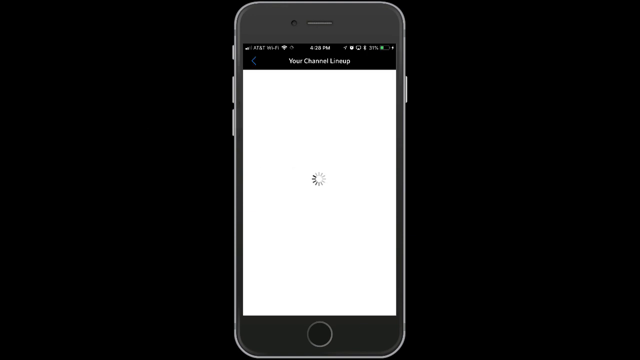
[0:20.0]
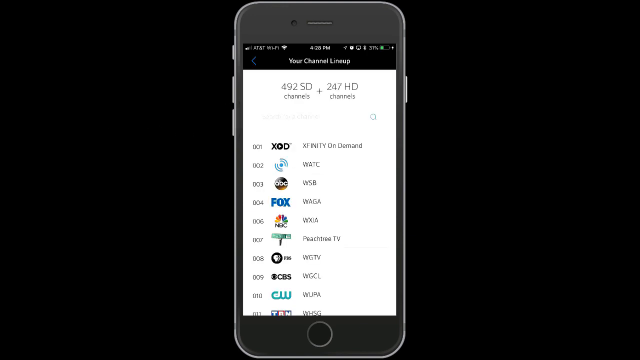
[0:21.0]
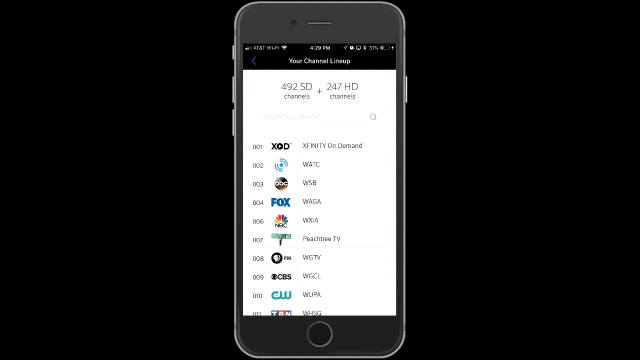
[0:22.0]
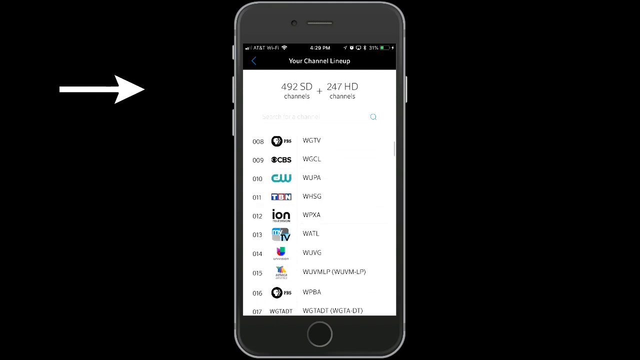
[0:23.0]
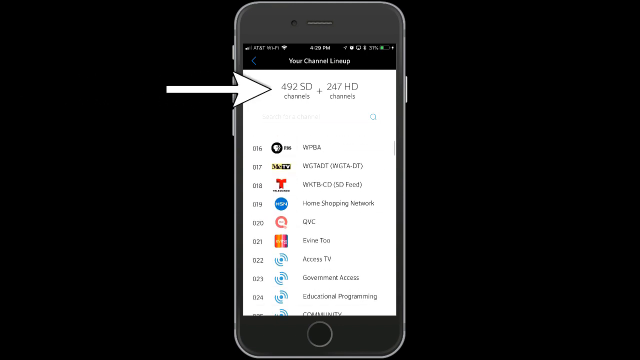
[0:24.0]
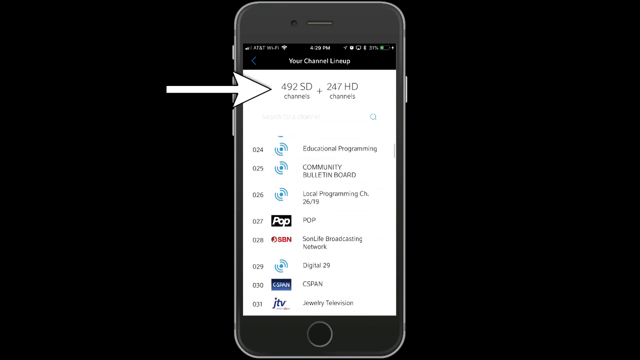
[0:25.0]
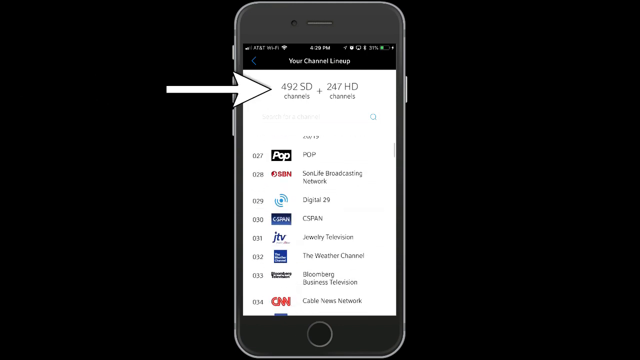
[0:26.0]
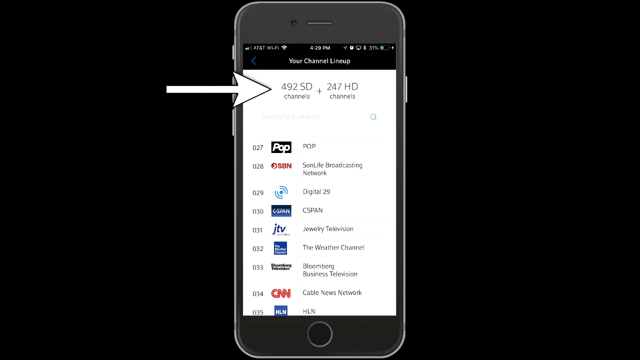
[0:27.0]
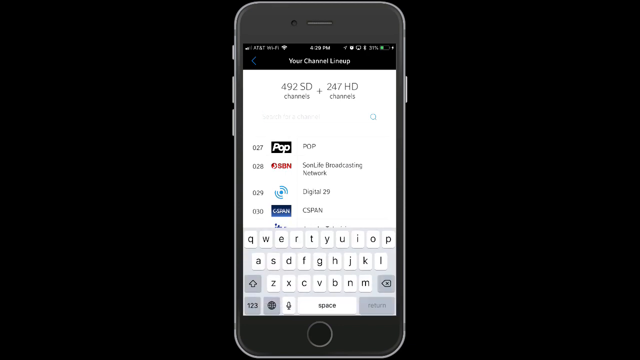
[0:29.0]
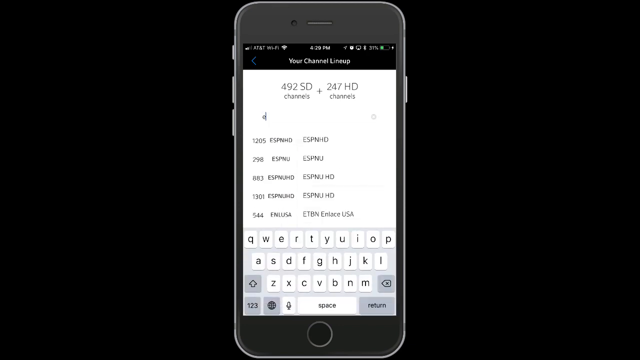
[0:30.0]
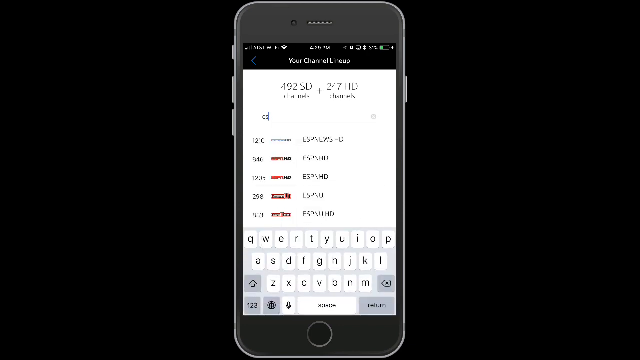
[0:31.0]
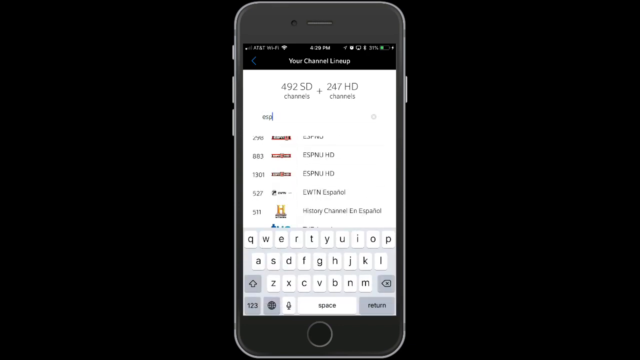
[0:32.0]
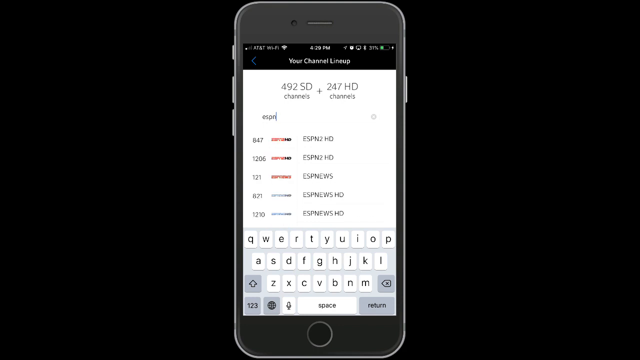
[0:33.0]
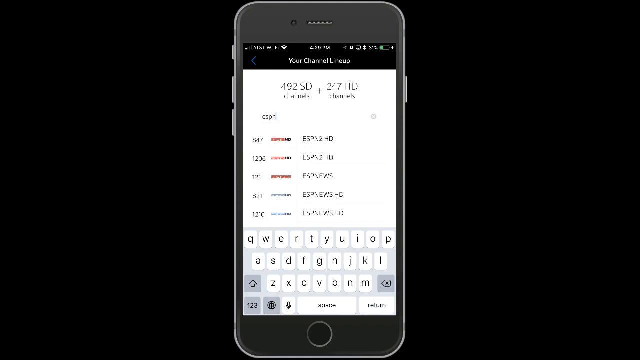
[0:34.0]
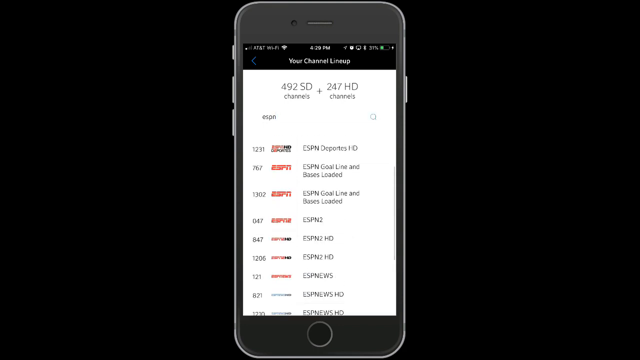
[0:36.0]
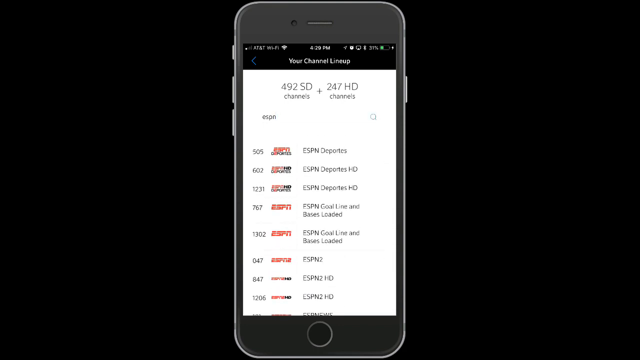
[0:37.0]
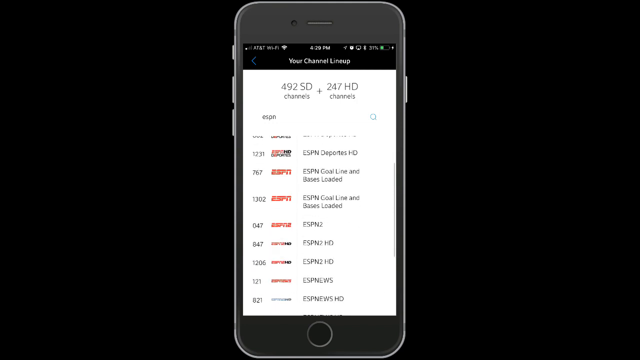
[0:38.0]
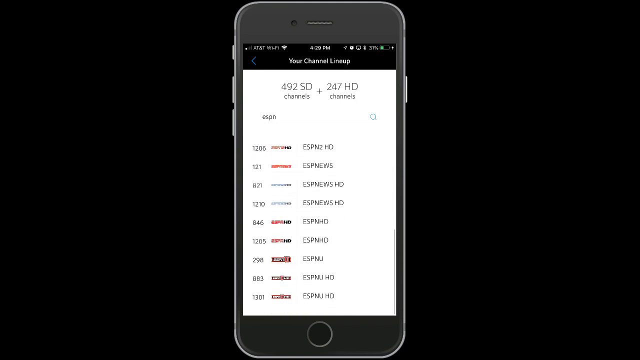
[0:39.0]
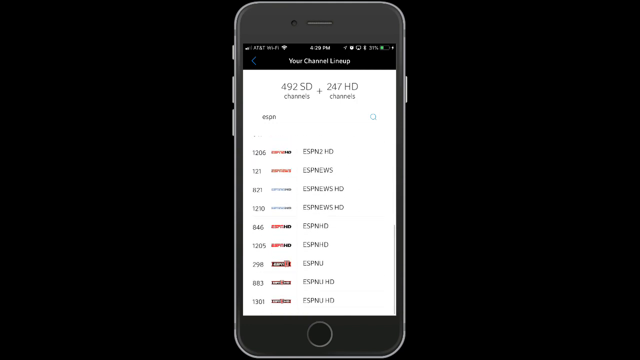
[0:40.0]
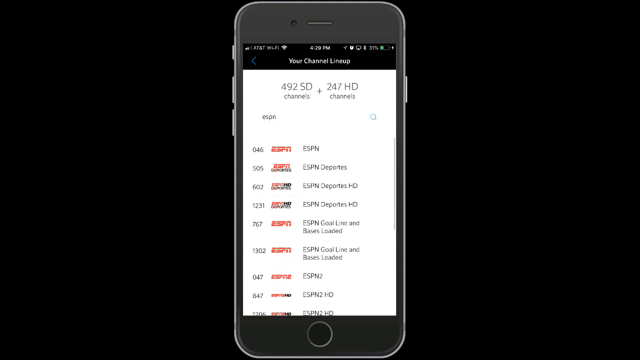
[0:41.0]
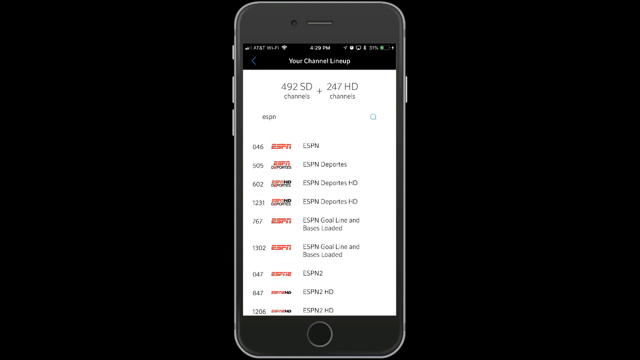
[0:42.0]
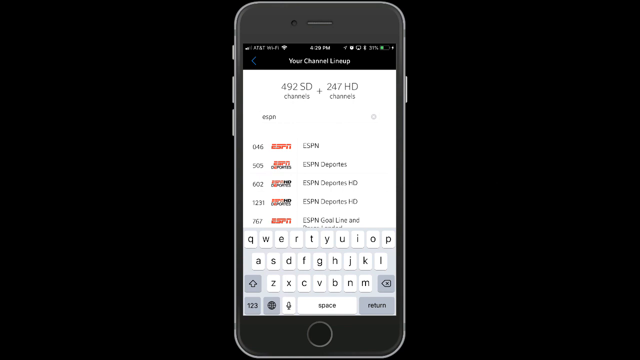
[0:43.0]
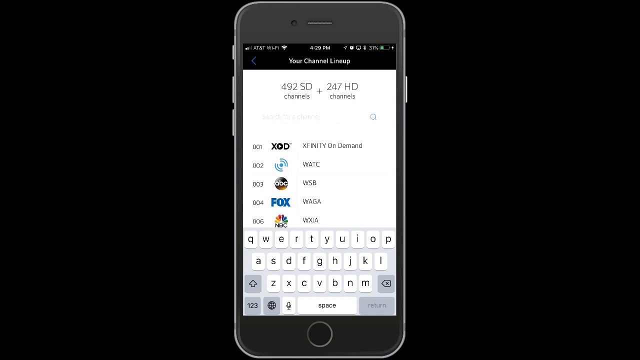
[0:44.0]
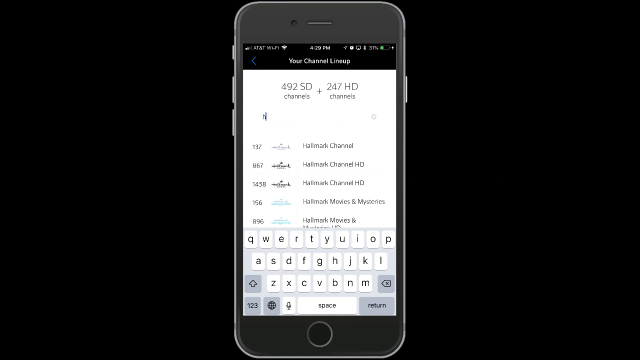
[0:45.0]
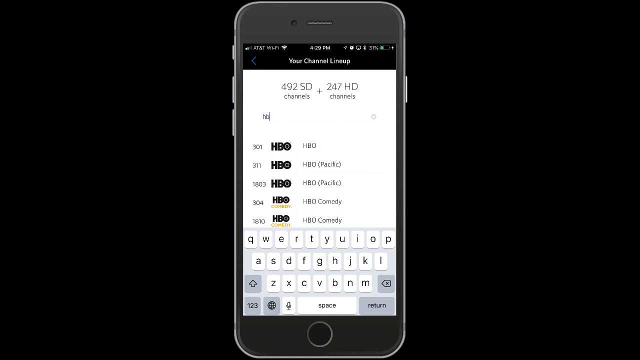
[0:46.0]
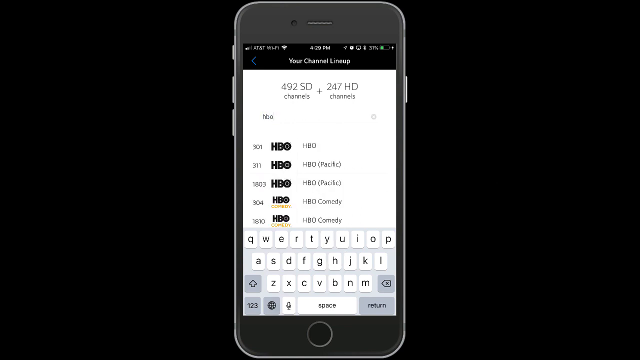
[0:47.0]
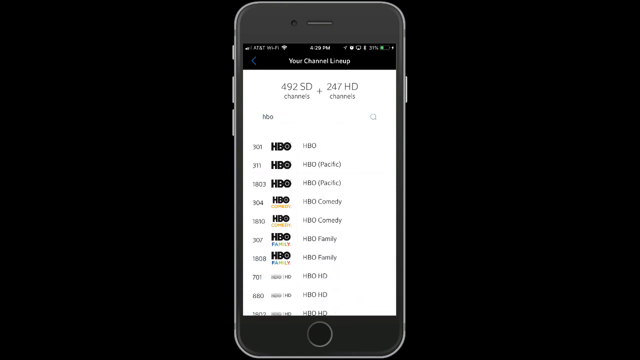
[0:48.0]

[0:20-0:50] The phone screen shows a white background with loading icons, then a page of different apps such as WPBA, QVC, Access TV and Conference Access. At the top, an arrow icon points to text containing "492 SD" and "247 HD". The screen is scrolled down to reveal more icons. A search for ESPN brings up different ESPN results such as news. The search is cleared, HBO is typed in, and different HBO apps are shown, such as news. A QWERTY keyboard pops up whenever the search is activated. The background behind the phone is entirely black, and the phone screen's background is entirely white. The top of the phone shows icons for battery, connectivity, Wi-Fi, the time and other common phone icons.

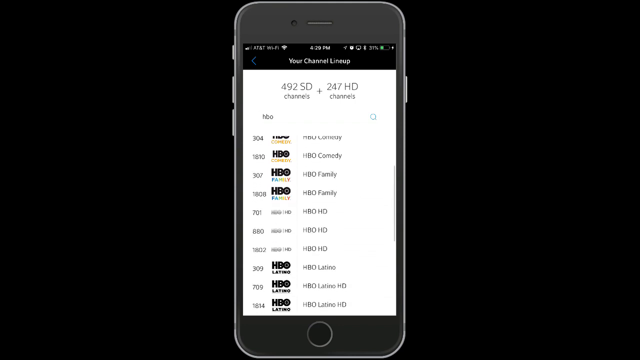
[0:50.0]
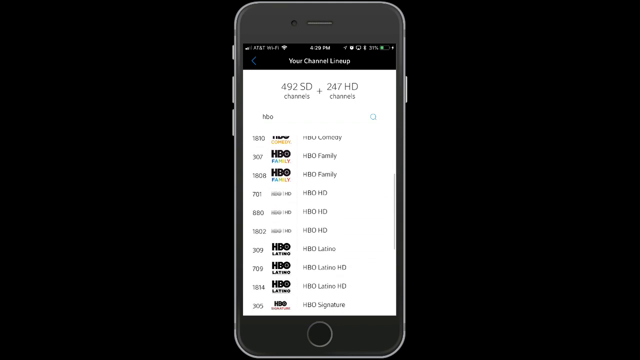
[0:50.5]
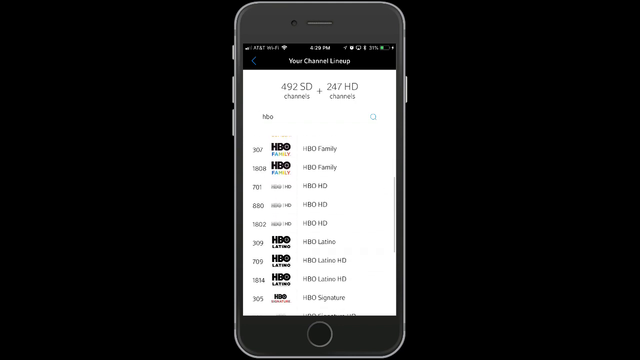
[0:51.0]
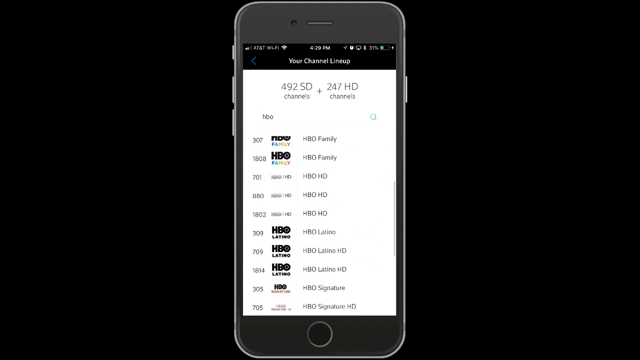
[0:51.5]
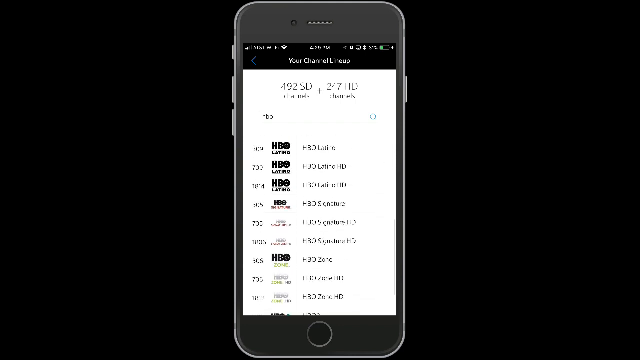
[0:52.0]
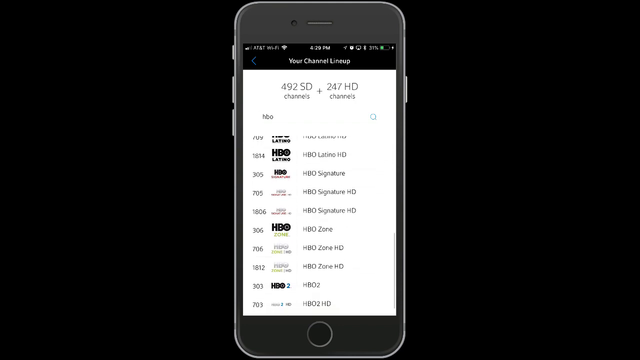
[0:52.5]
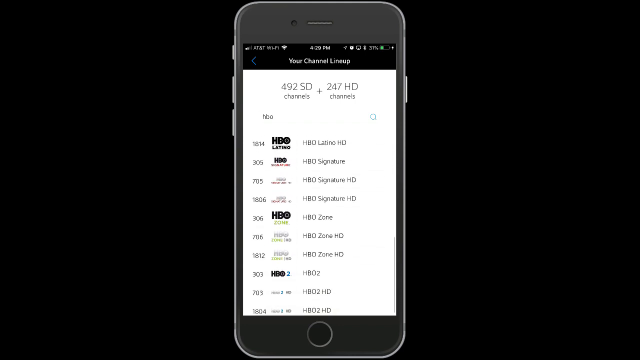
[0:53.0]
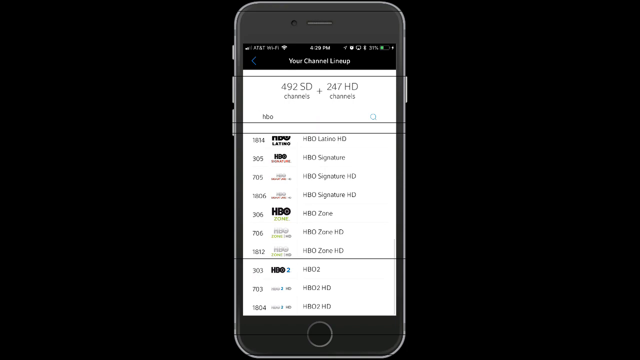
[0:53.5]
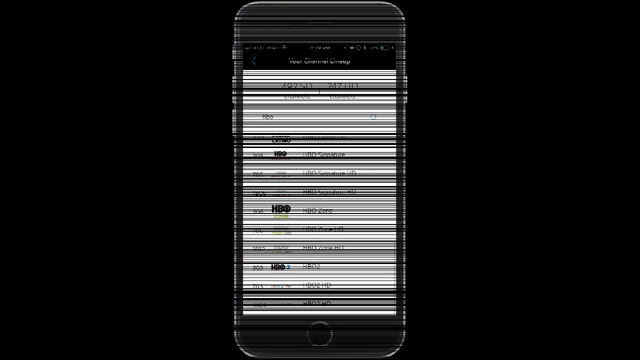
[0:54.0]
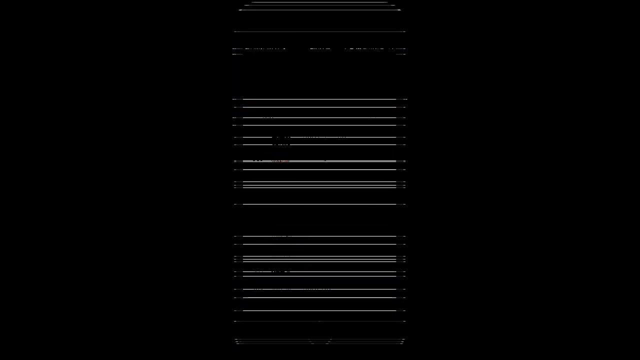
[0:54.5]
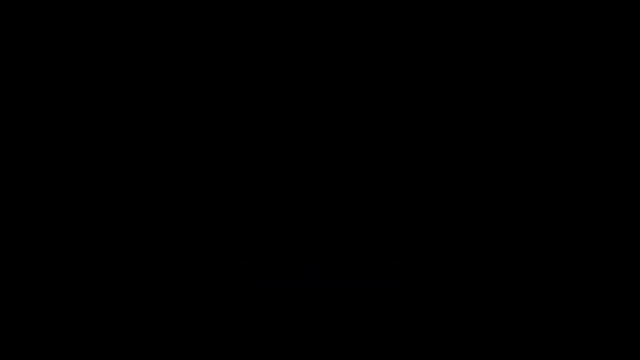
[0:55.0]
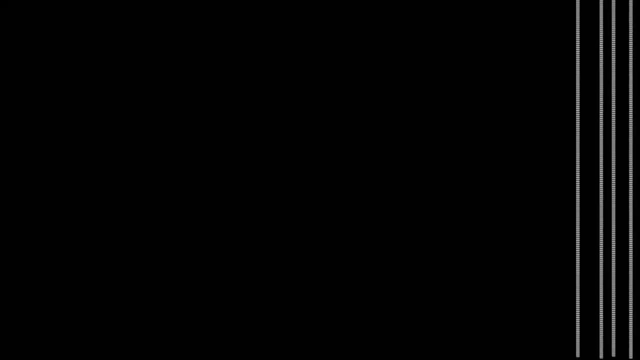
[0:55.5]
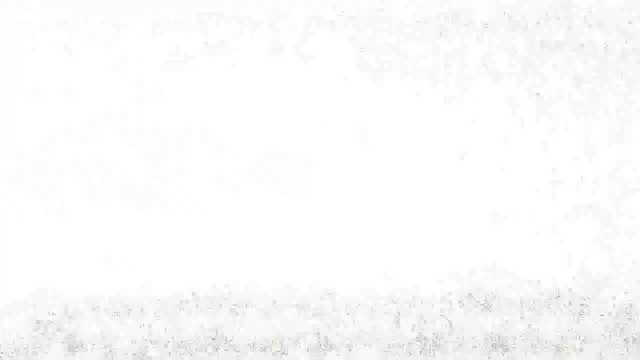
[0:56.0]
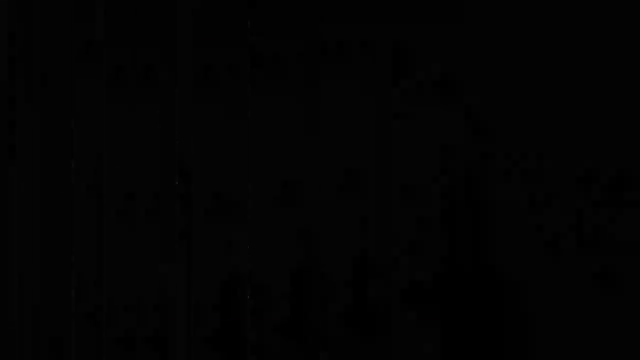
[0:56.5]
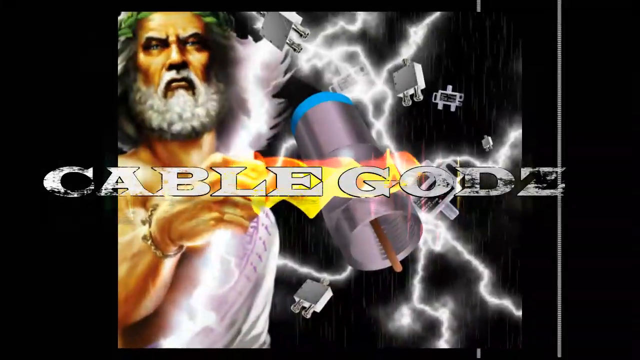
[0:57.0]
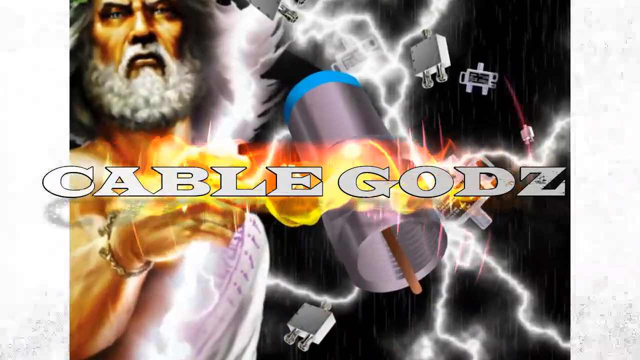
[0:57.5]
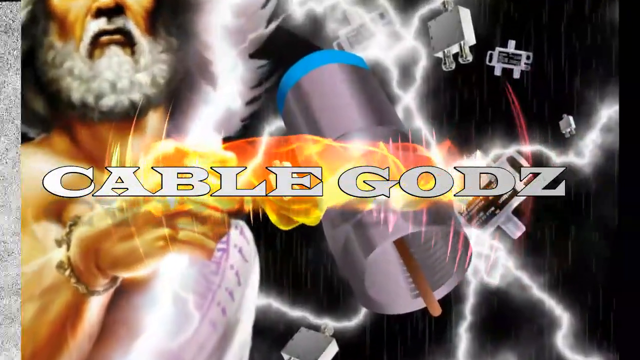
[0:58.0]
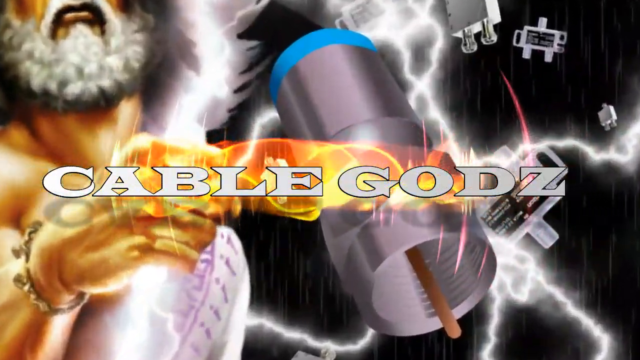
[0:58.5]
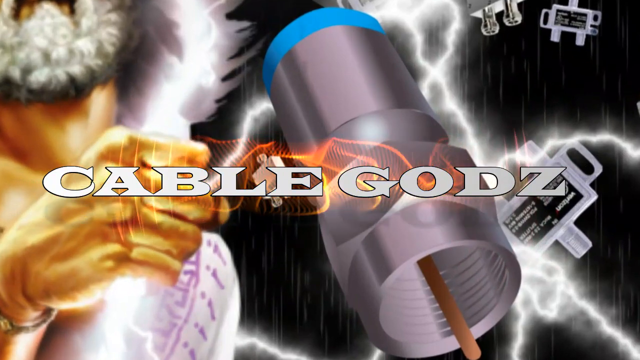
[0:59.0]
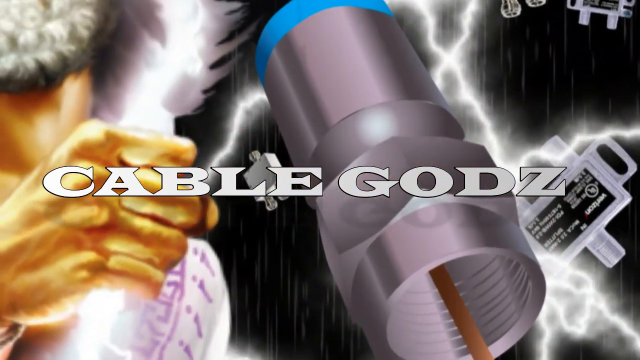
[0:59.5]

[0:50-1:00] The black phone is shown against a black background. The screen displays different HBO options within an app, such as HBO Comedy, HBO Family and HBO HD, each with a different icon. The screen is scrolled down to show more HBO options, including HBO Signature, HBO Signature HD and HBO Zone. The screen then transitions out with a Pokemon-style flash and horizontal wipes, leading to a page that says "Cable Gods". The page shows a character along with lightning, holding a few devices that connect to something. One of the pipes has blue lightning toward one of its ends.